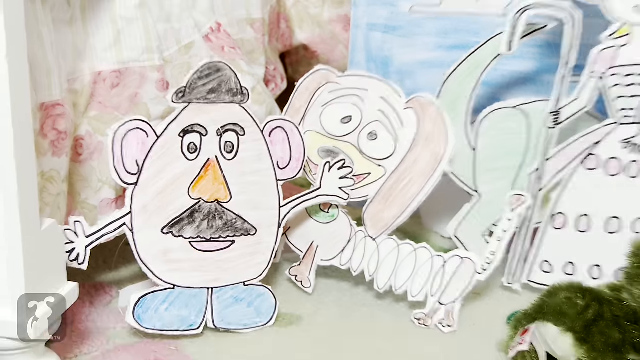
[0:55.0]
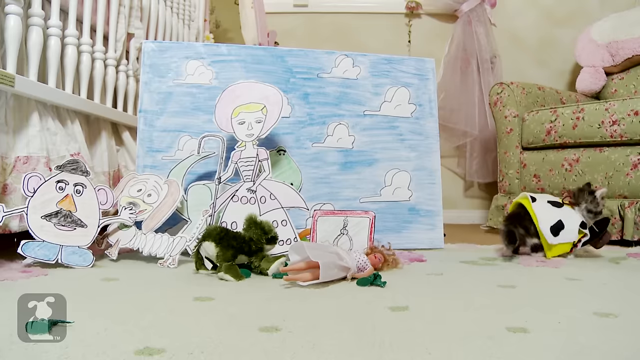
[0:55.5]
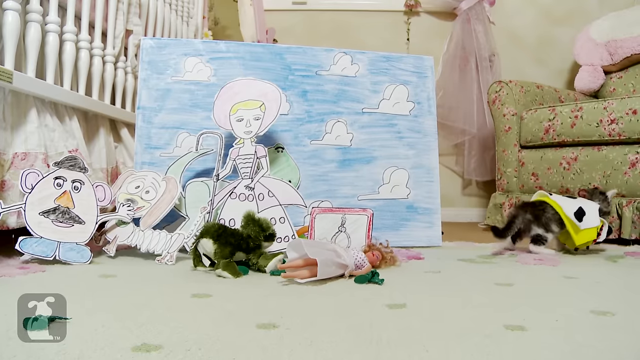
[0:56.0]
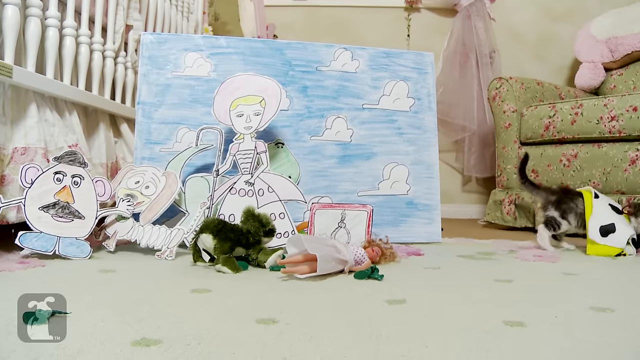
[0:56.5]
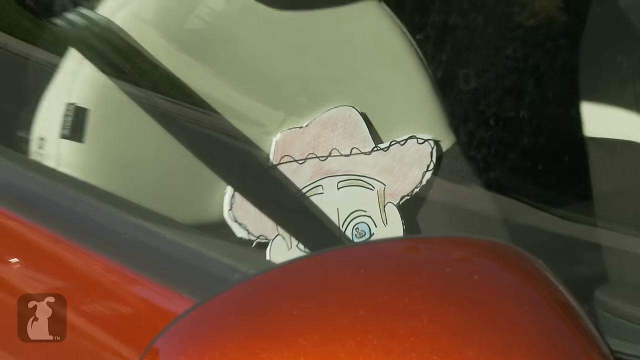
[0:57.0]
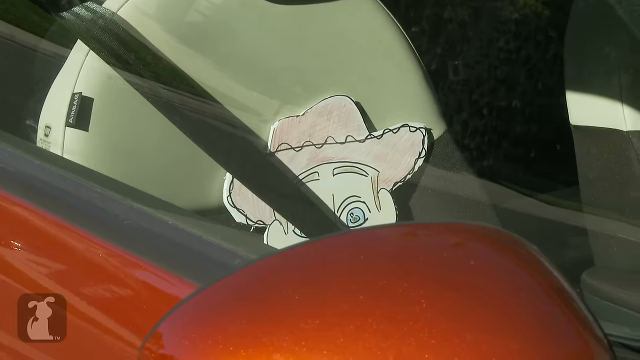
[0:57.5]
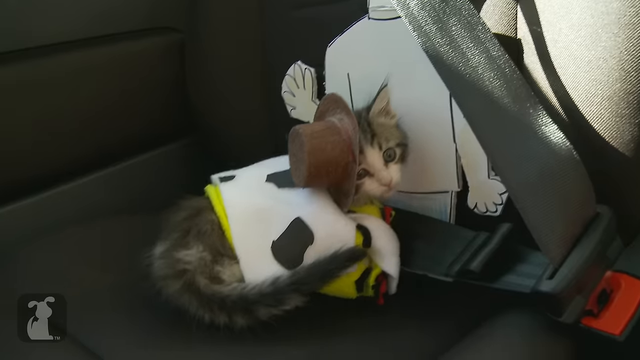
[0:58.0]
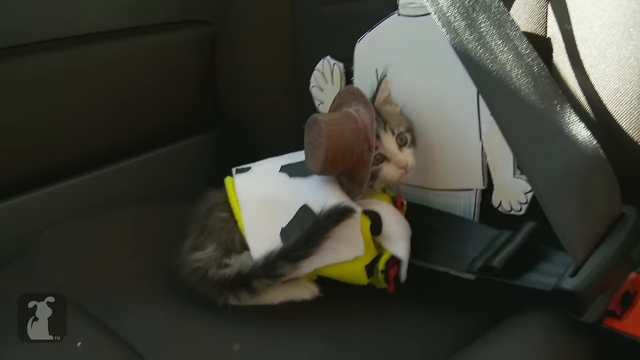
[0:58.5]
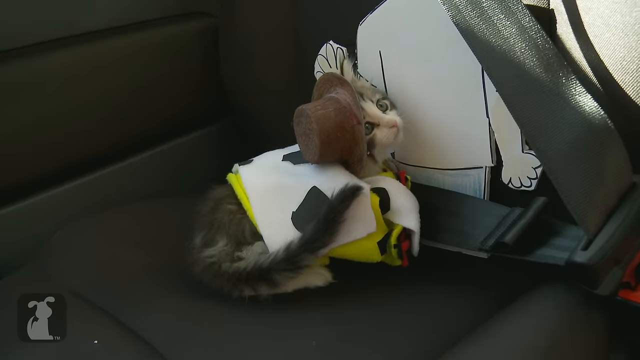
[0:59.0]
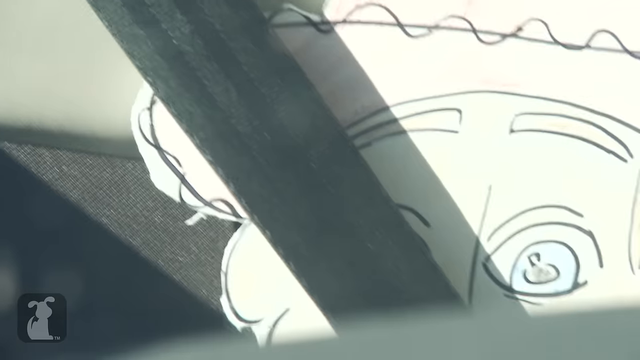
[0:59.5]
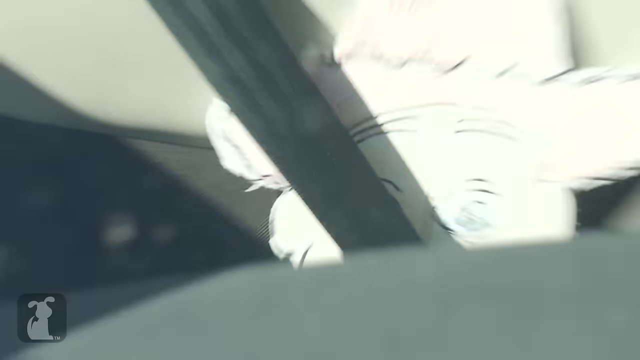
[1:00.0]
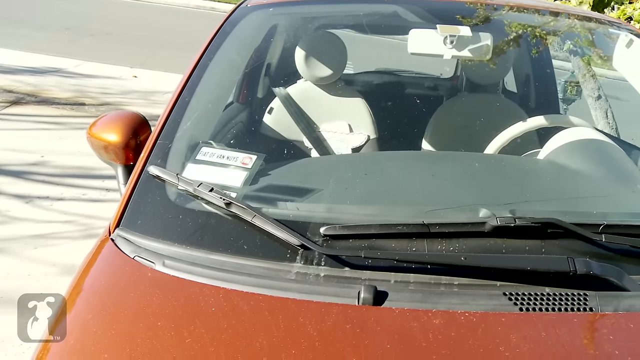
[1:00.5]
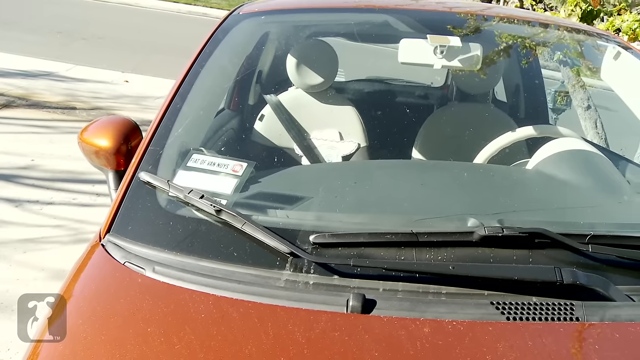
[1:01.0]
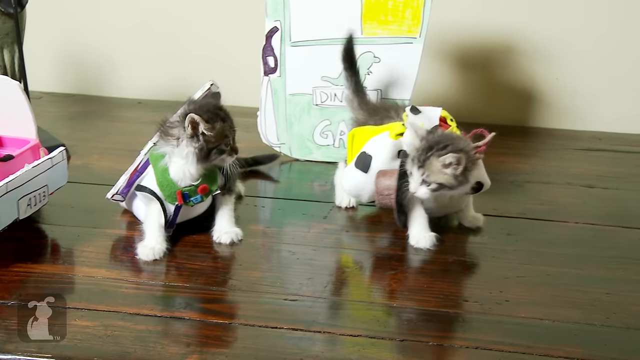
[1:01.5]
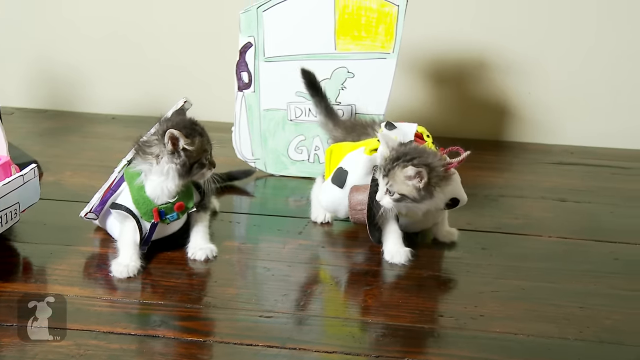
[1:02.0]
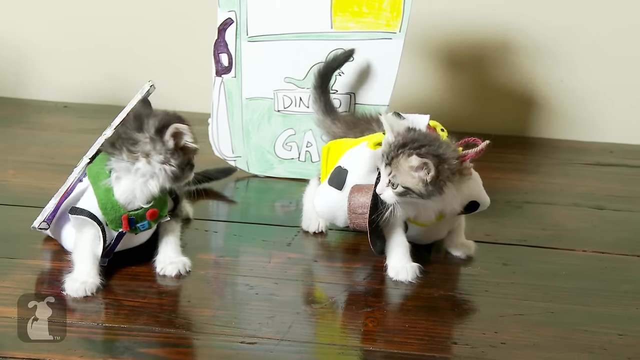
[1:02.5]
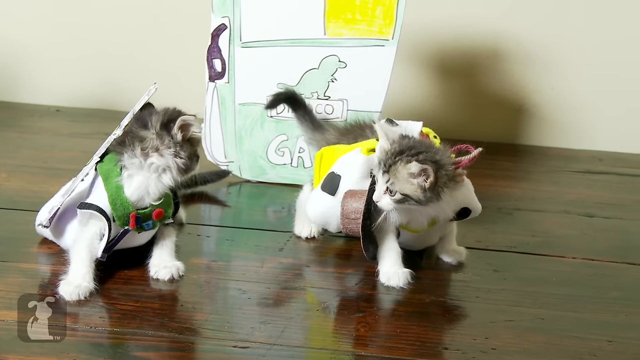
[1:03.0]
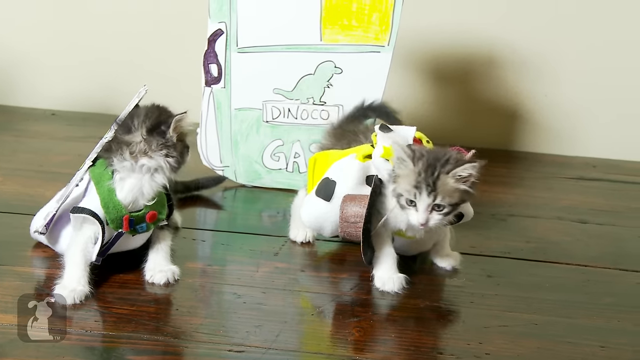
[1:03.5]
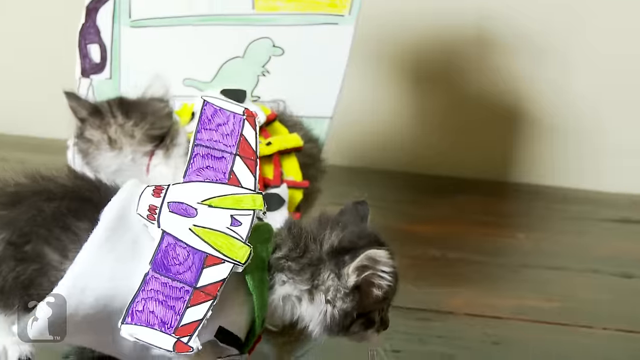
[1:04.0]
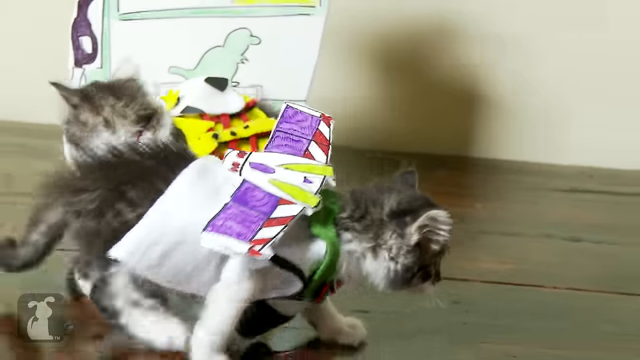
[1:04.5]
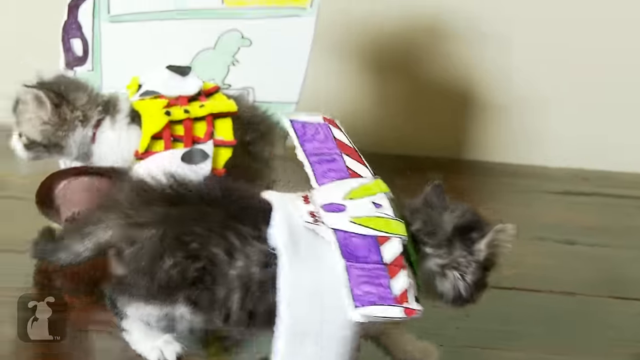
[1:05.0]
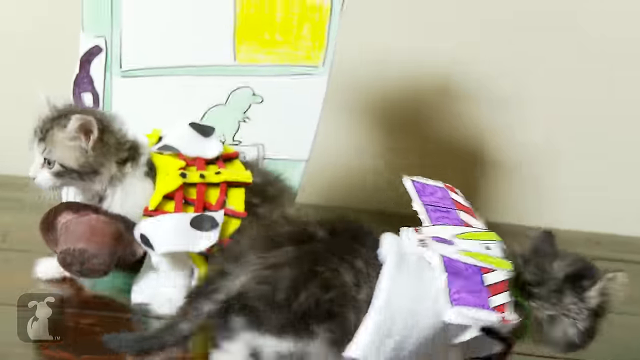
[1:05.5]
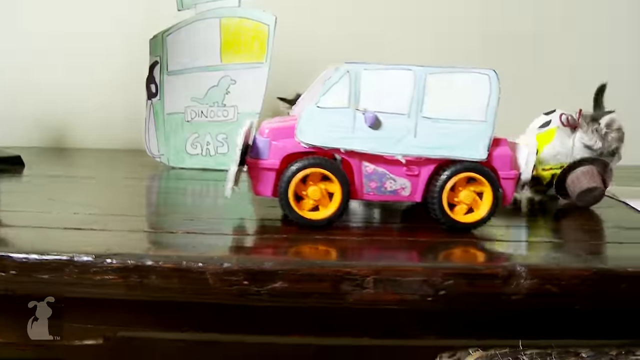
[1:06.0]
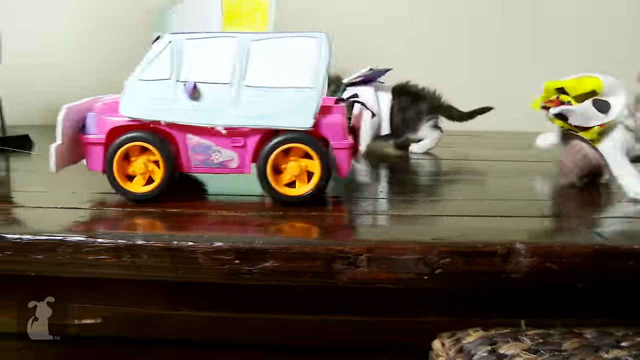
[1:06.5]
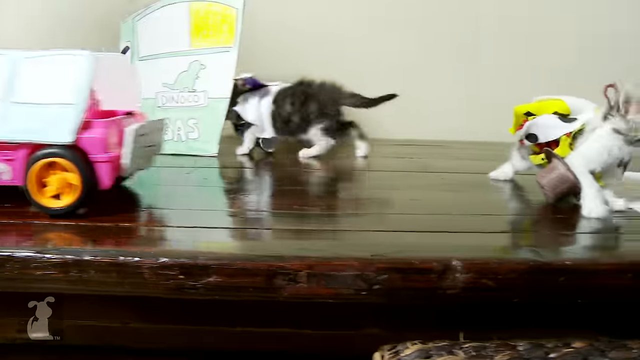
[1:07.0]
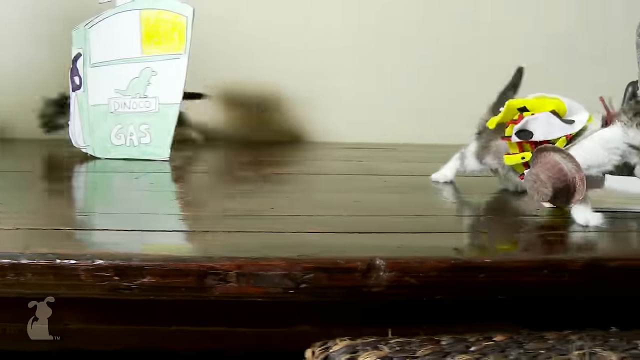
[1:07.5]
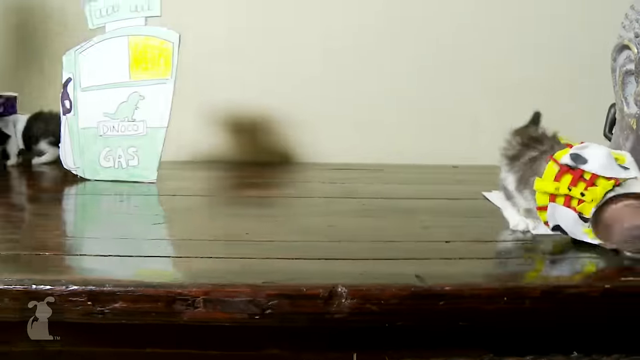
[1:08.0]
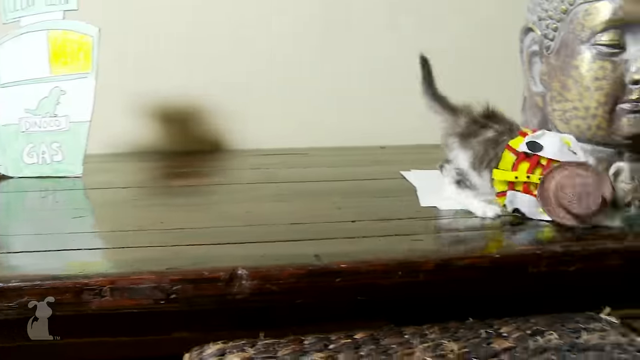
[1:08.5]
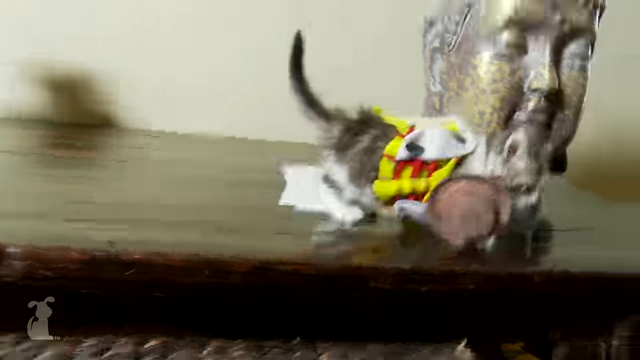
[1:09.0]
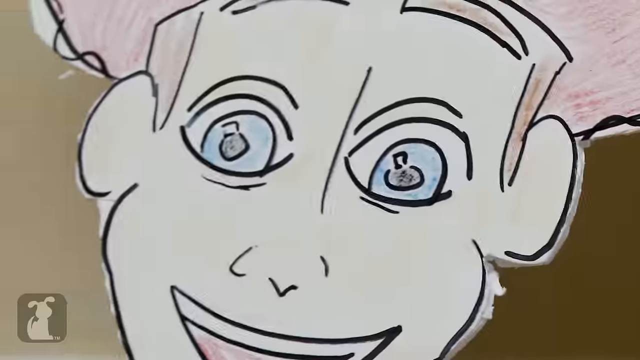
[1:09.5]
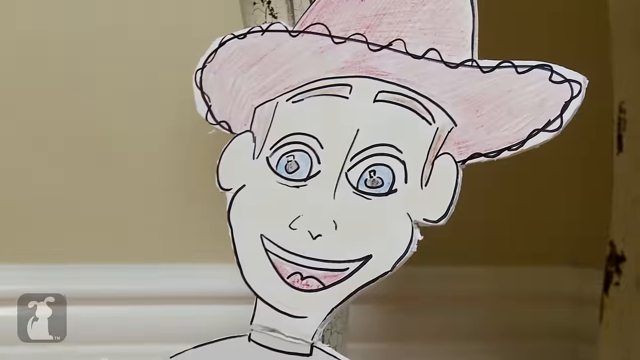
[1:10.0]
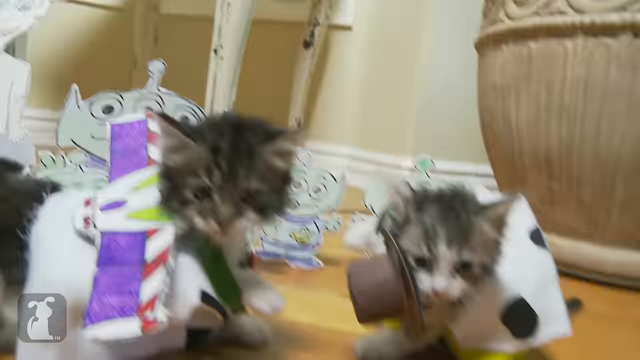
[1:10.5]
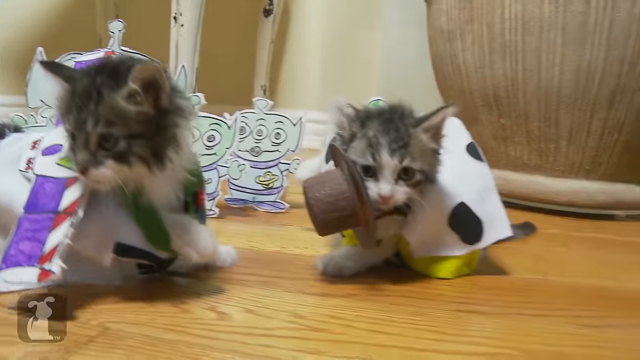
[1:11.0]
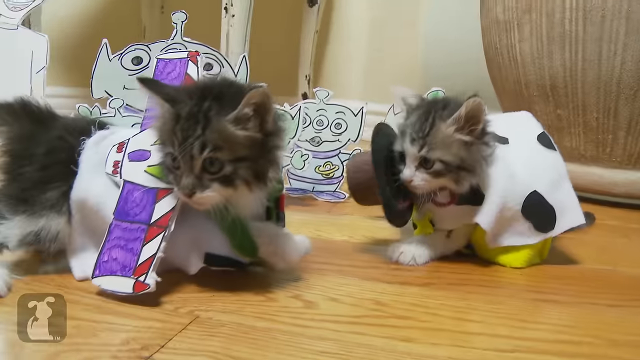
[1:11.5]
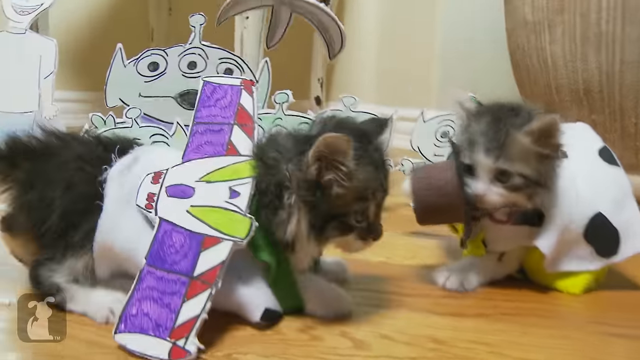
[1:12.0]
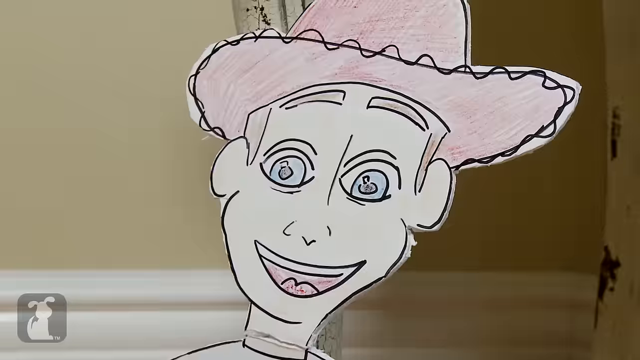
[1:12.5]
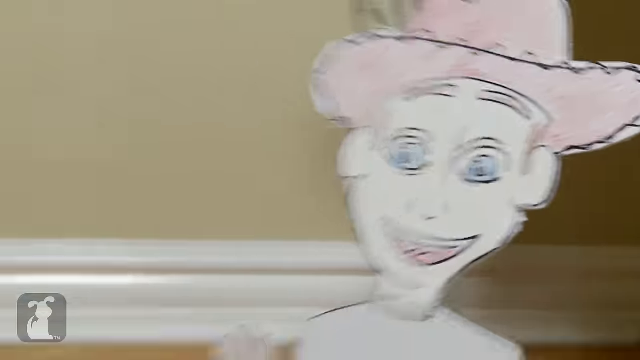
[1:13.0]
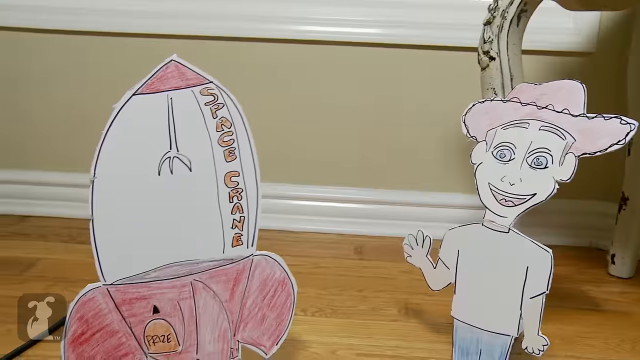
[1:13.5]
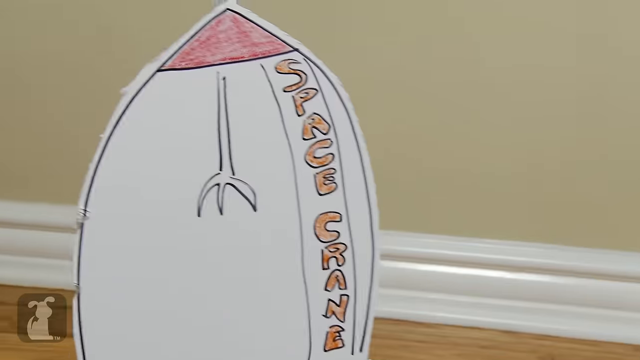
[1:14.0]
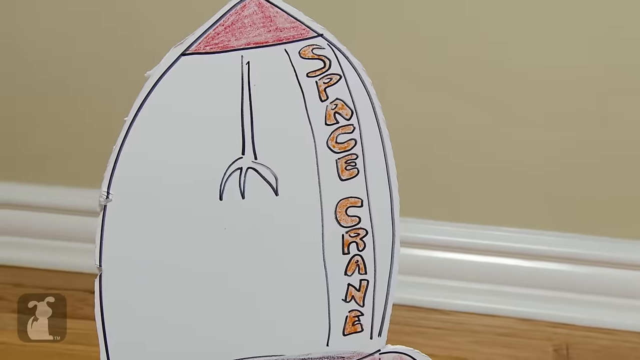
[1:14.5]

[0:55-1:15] Two kittens have Toy World cardboard cutouts attached to their limbs. One of the kittens is having serious trouble with a little leather hat fastened around its neck; it is likely supposed to be on the kitten's head, but it is dangling against its chest, making it very difficult for the kitten to move with any accuracy. The two kittens appear very worried about something. The camera then pans to a cardboard cutout of a Toy World character sitting in the driving seat of a vehicle, and a kitten is placed on the front seat in front of it. It does not look comfortable there.